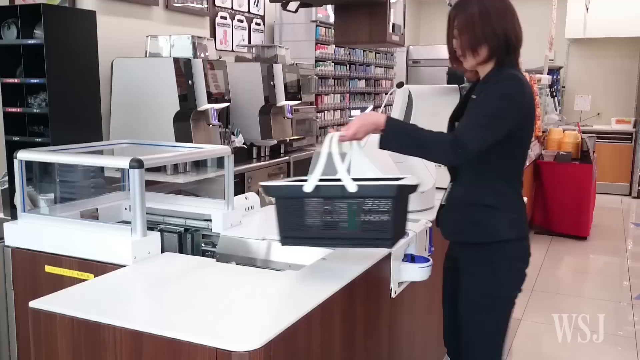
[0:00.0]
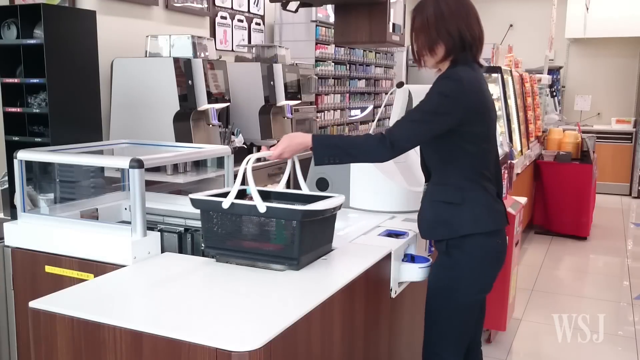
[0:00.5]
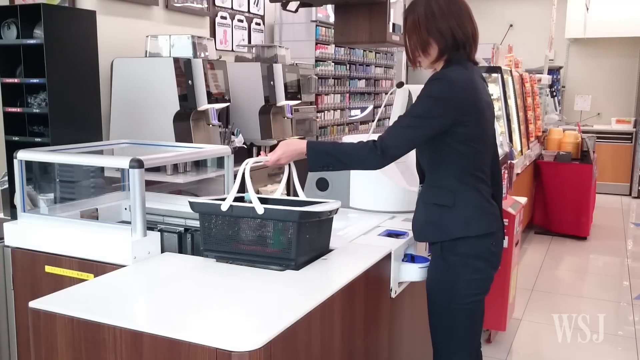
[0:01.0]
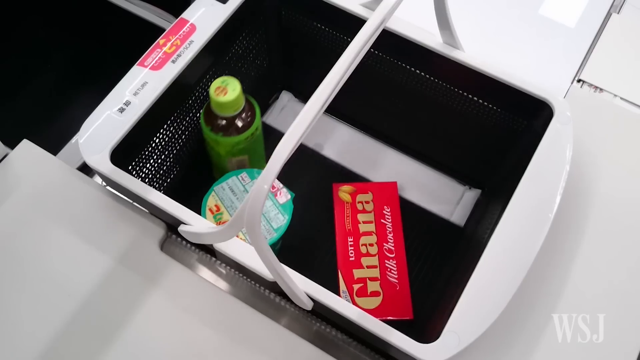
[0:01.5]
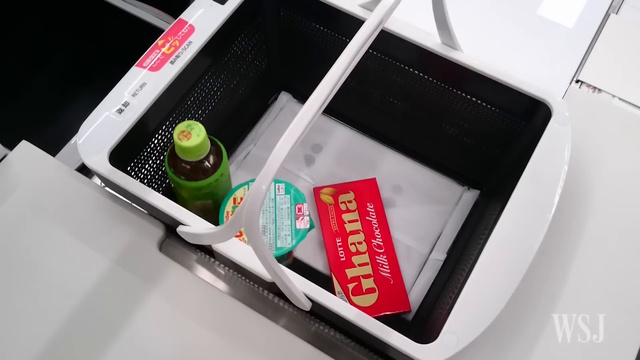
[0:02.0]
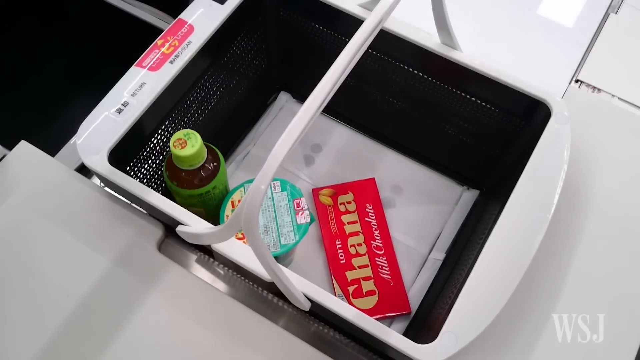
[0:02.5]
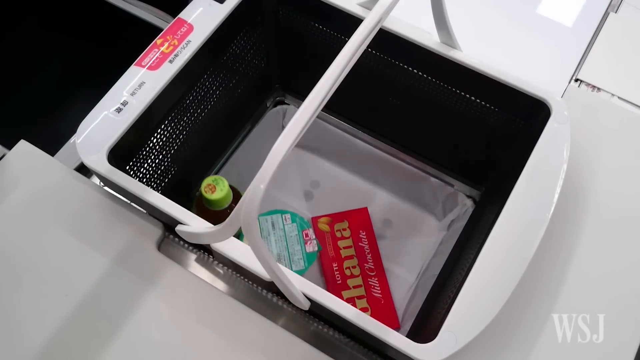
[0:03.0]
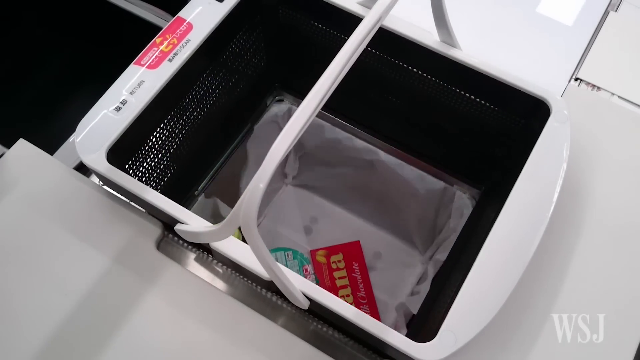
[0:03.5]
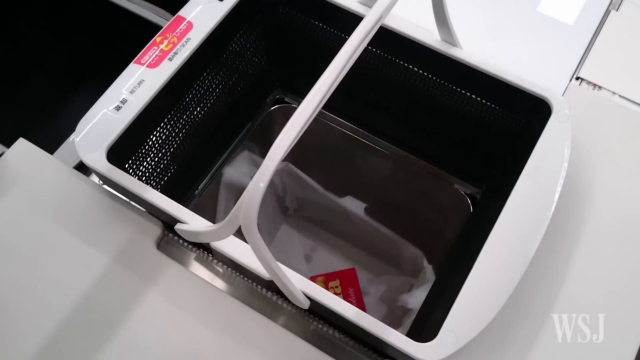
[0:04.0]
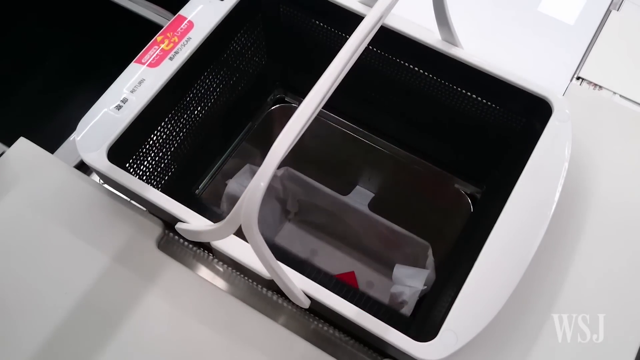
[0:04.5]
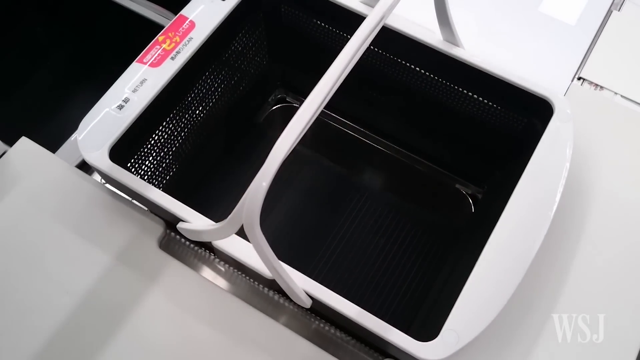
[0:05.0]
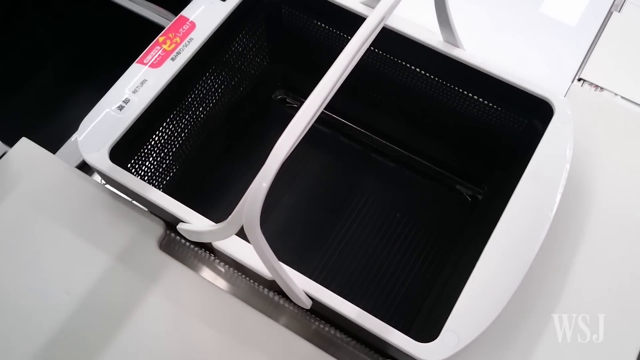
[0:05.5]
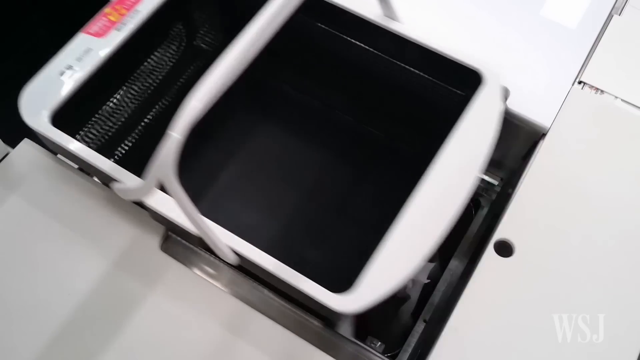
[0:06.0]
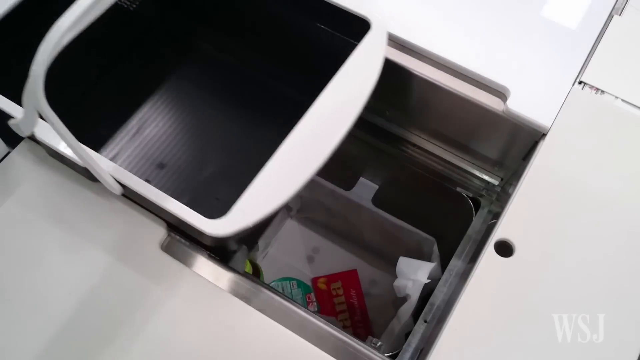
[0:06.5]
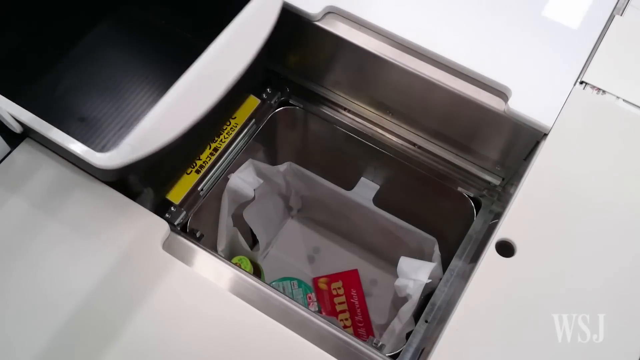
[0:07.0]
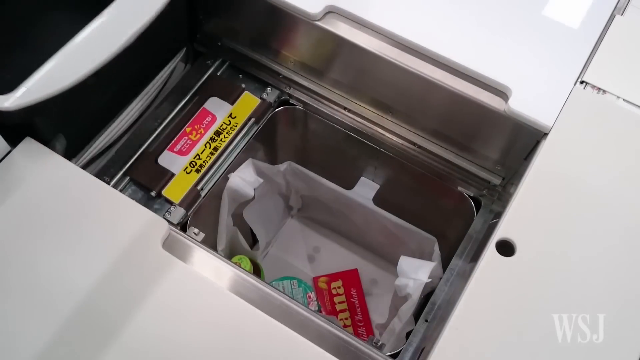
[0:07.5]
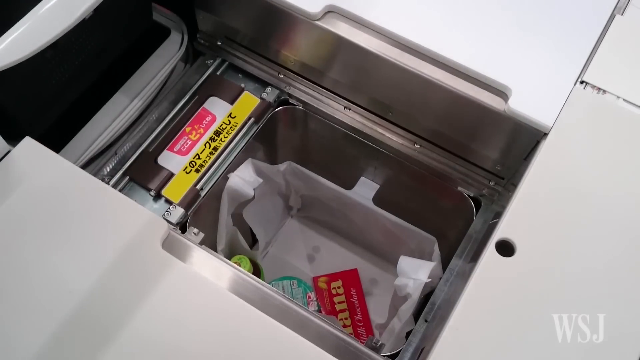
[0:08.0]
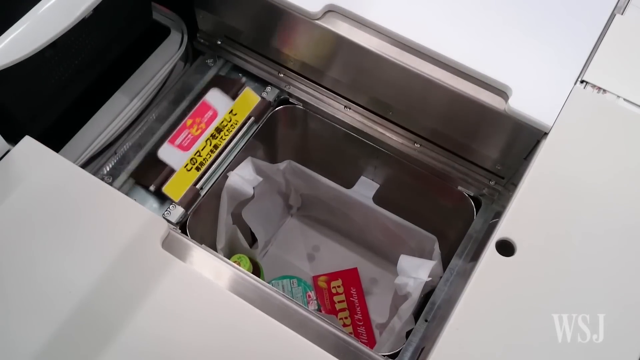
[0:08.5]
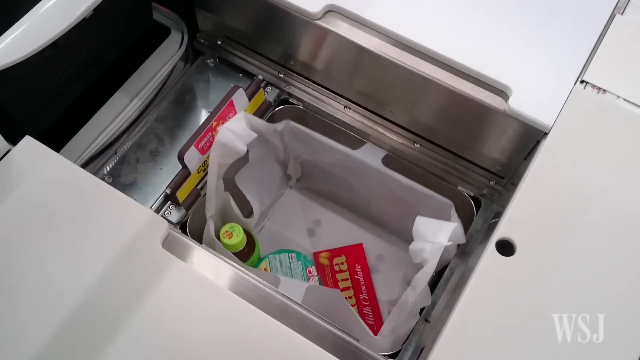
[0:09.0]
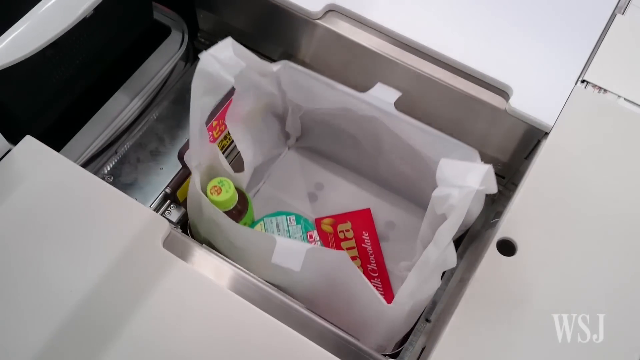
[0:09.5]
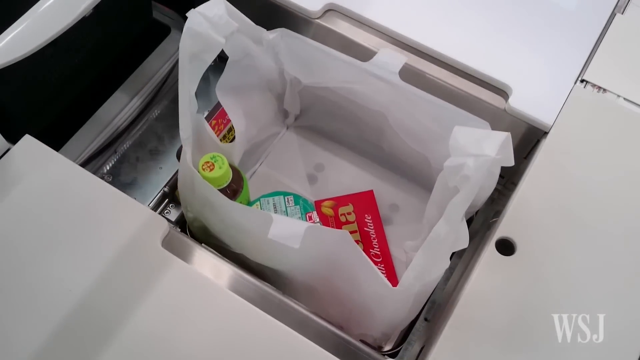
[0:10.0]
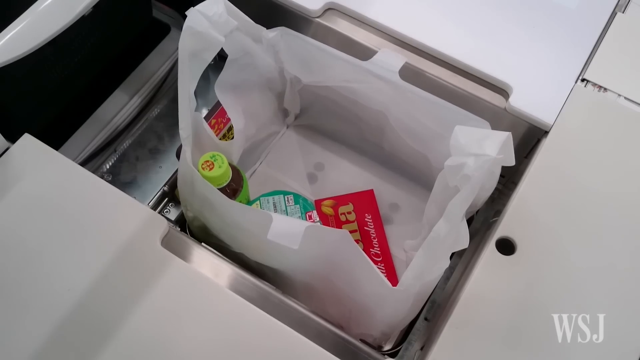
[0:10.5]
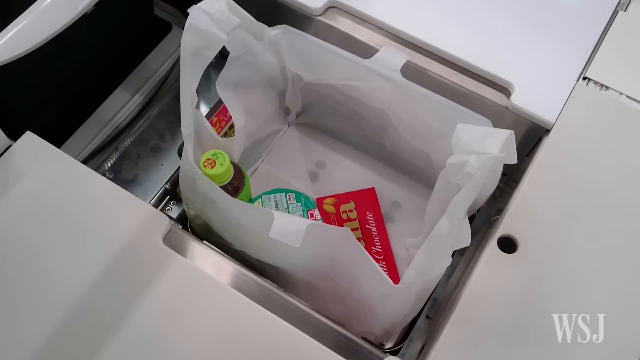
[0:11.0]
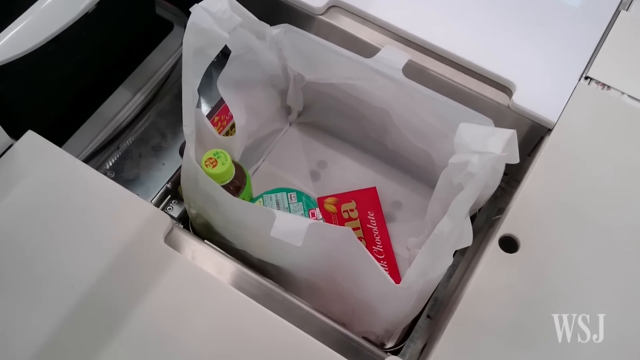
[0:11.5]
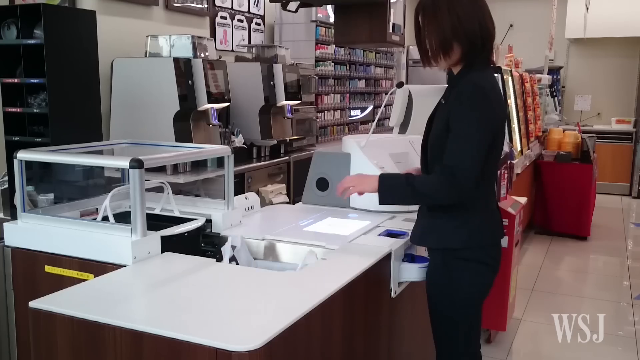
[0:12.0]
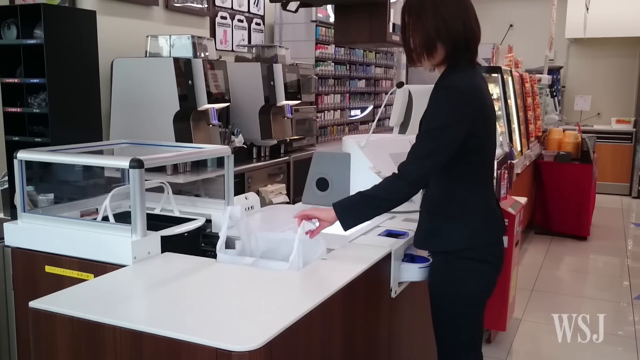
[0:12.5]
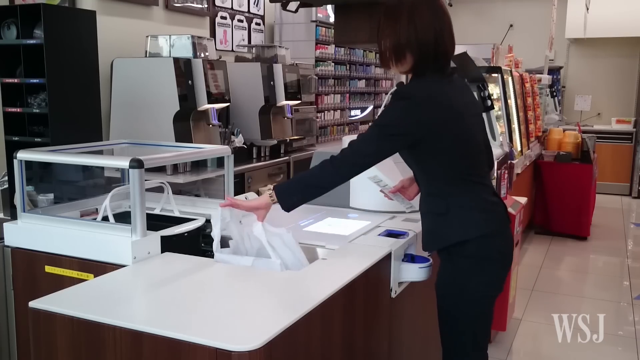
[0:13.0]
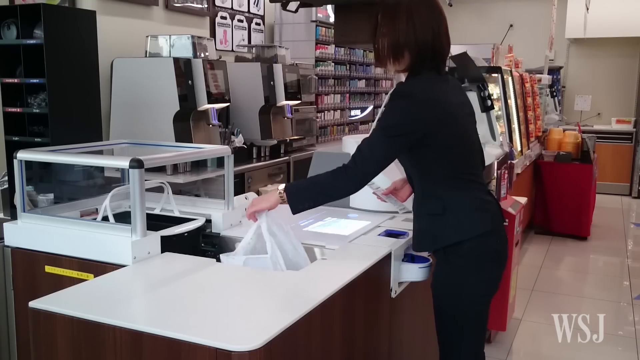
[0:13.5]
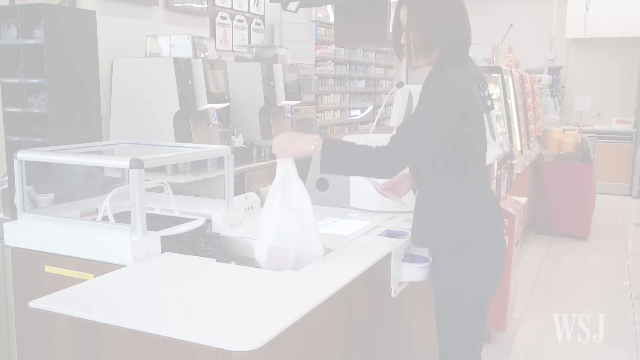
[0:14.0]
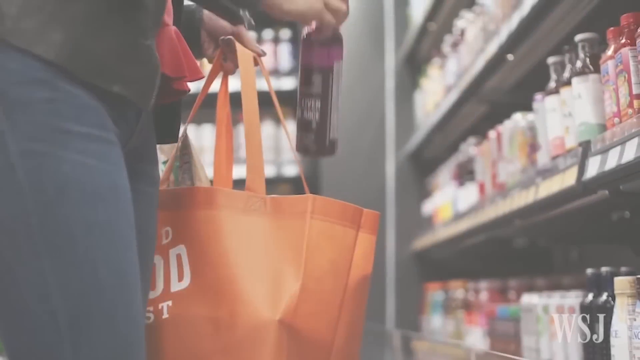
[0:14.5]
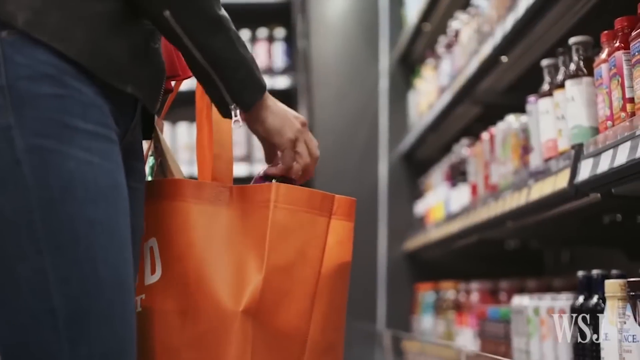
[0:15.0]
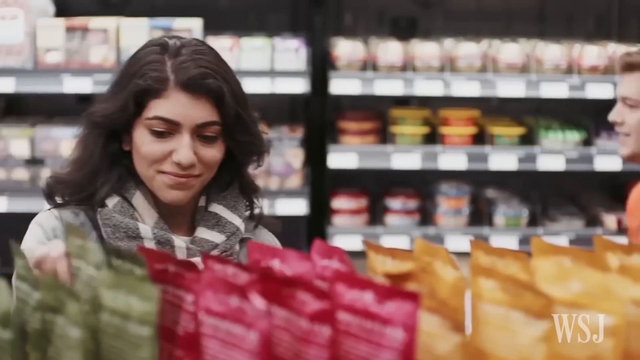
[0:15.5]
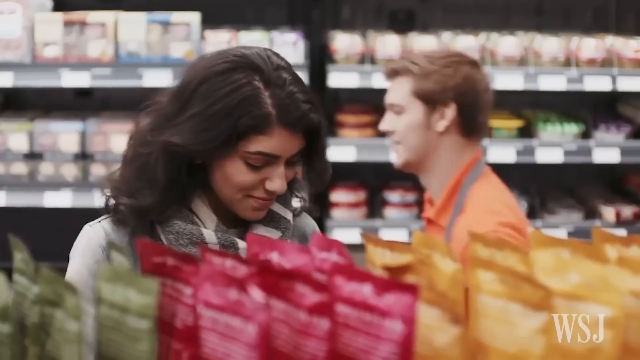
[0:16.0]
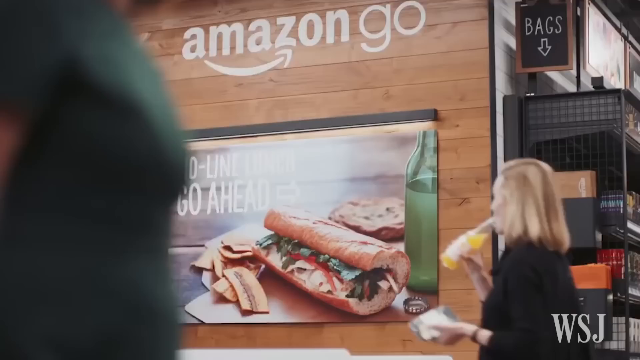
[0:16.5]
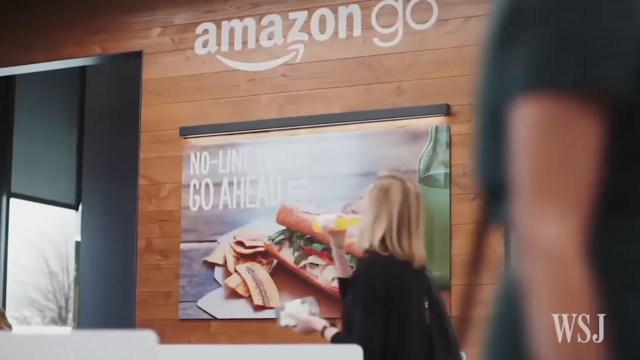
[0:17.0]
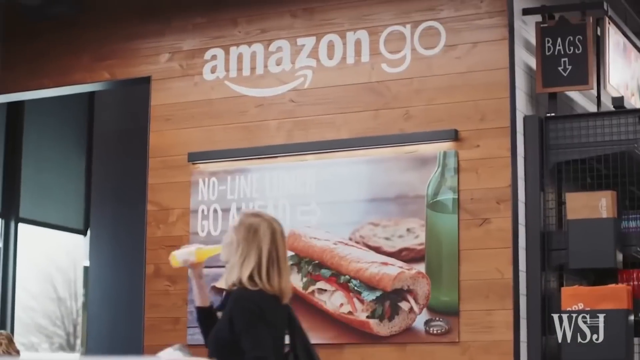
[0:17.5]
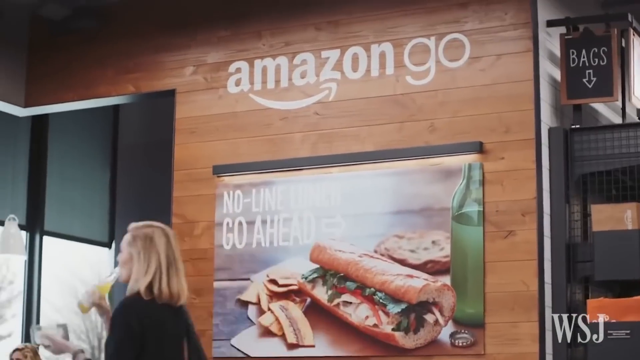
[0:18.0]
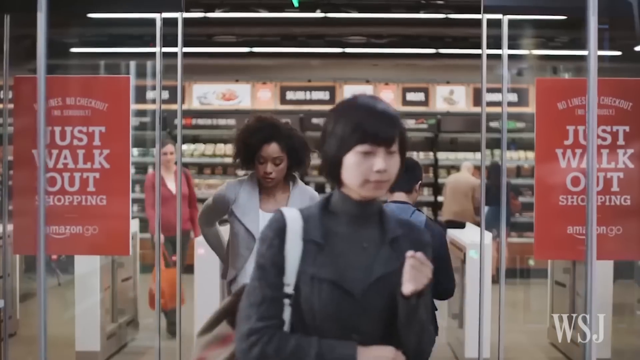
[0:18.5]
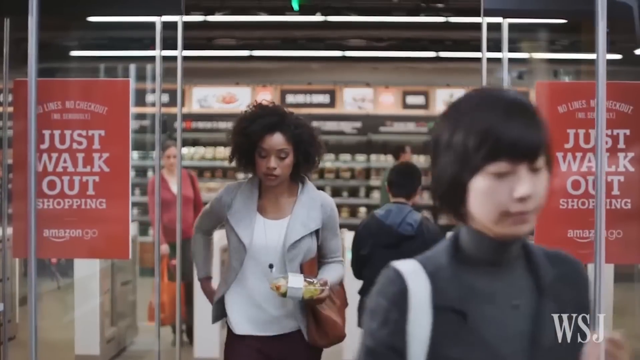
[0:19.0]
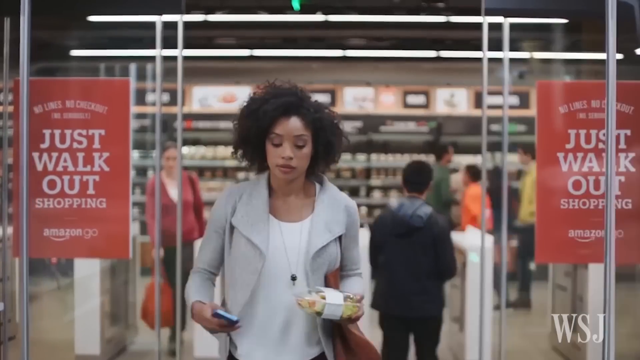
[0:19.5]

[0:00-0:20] An Asian woman stands at a counter of the kind seen at a grocery store, holding a small black shopping basket with white handles in her left hand. She faces the counter, sideways to the camera. She sets the basket down on the counter, and the area below the basket opens up; everything in the basket is brought down like an elevator into a bag. The bottom of the basket closes, the basket is moved out of the way by technology, and the bag shoots up. The scene changes to a woman bent down, putting a drink into a bag. Another woman reaches for something and puts it into her bag while someone shops behind her. A lady walks by a picture of a sandwich on the wall. People exit the store without anybody checking anything; they do not exit at the counter but simply walk out with what they want. A woman checks her phone as she leaves, holding the food she got in her glass cup.